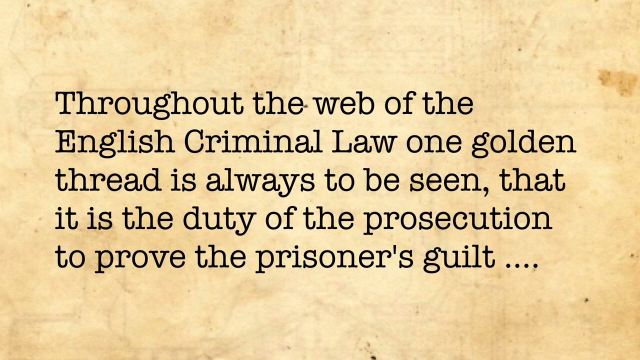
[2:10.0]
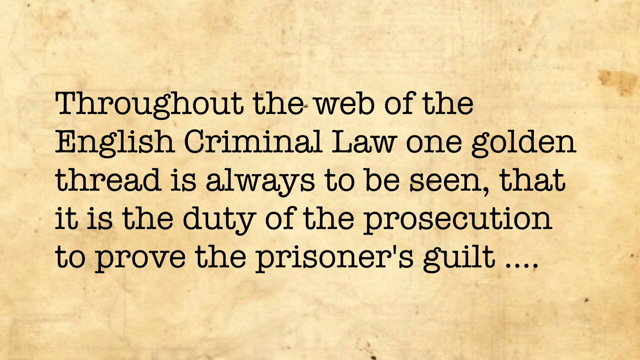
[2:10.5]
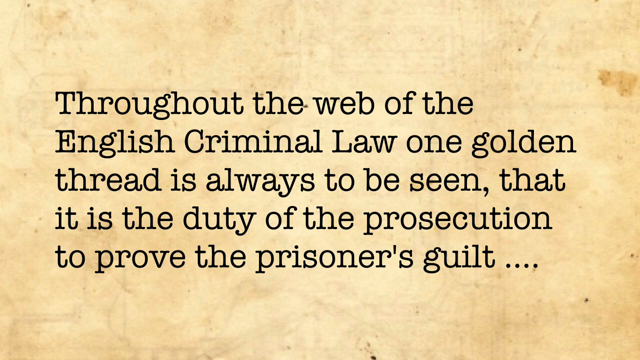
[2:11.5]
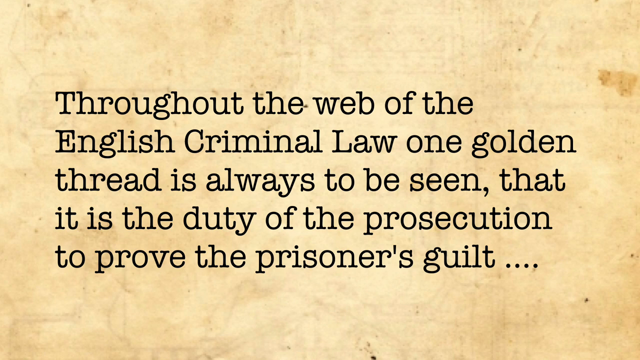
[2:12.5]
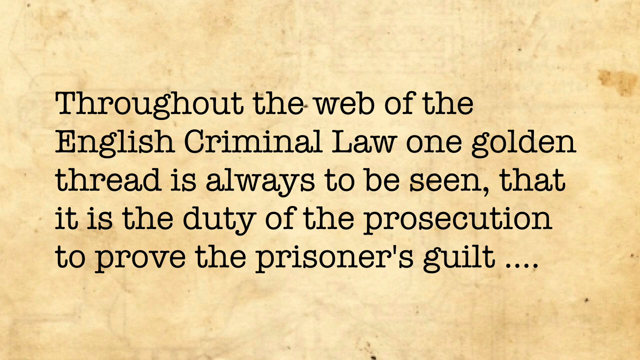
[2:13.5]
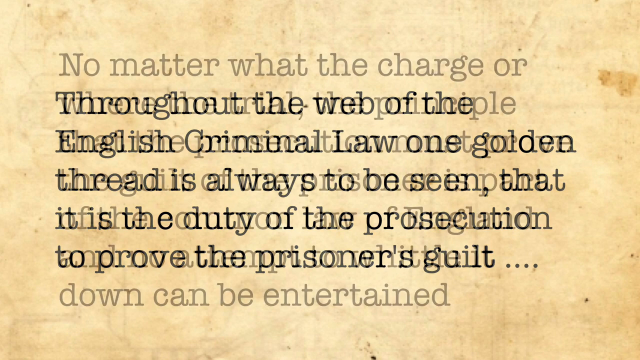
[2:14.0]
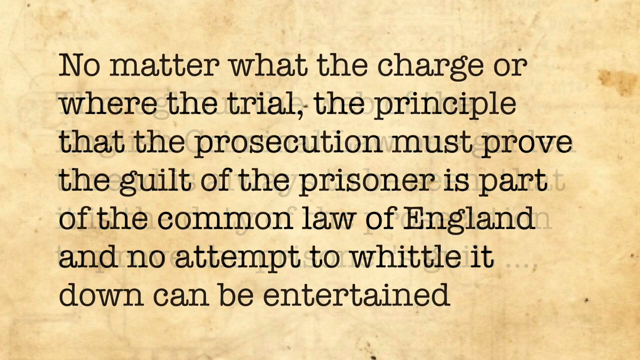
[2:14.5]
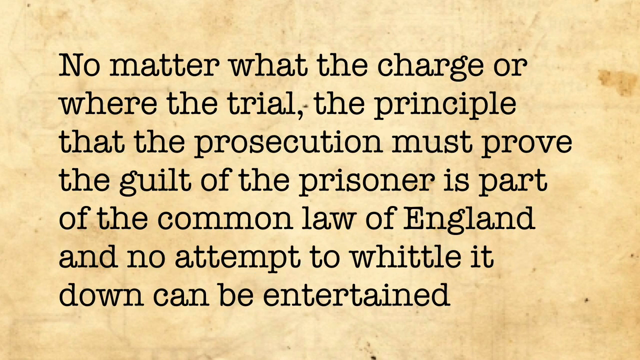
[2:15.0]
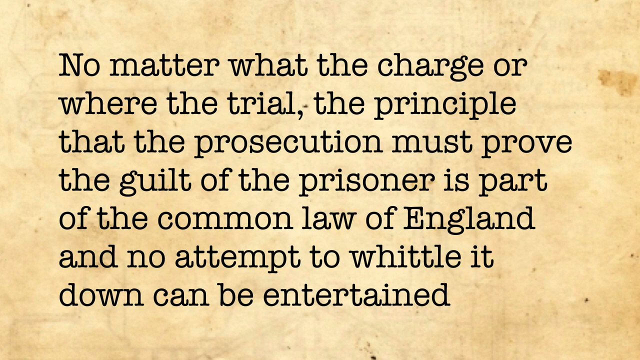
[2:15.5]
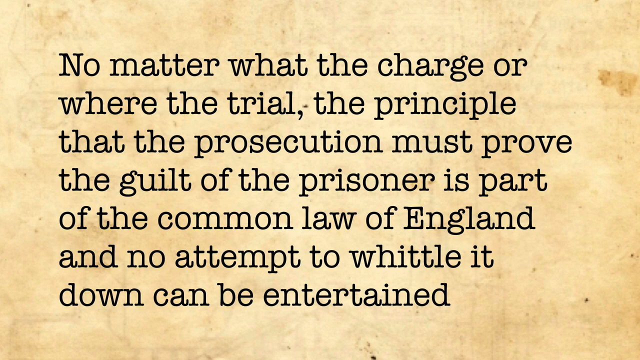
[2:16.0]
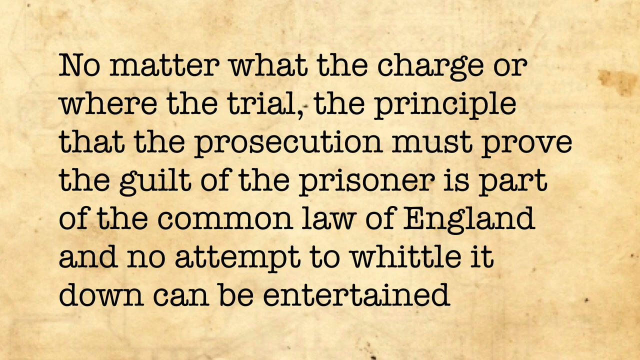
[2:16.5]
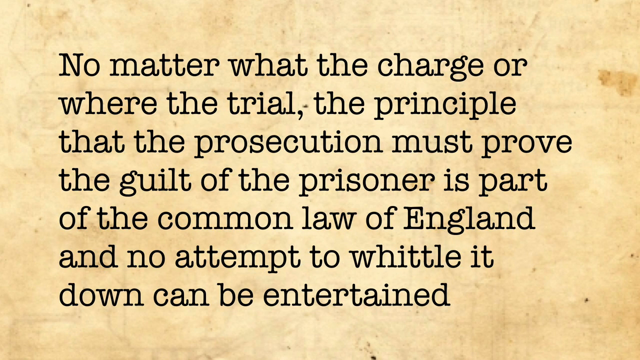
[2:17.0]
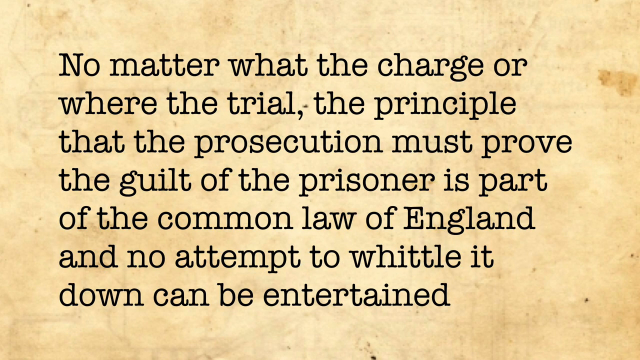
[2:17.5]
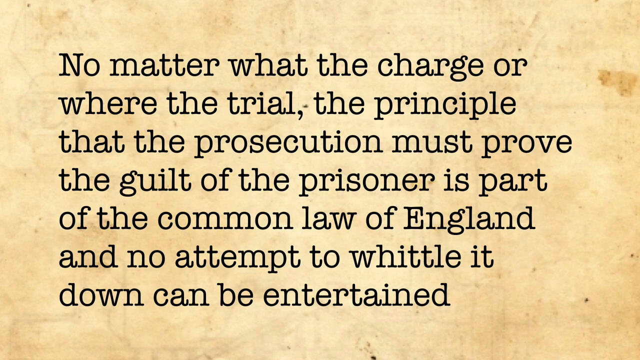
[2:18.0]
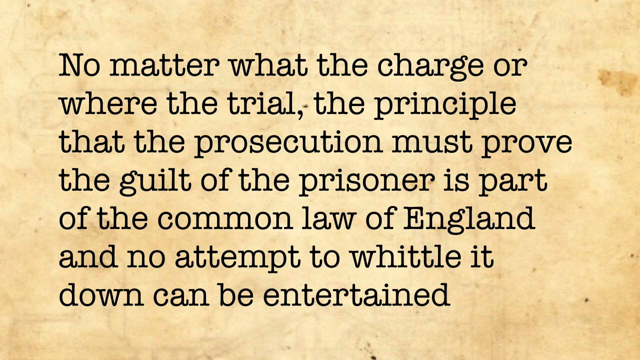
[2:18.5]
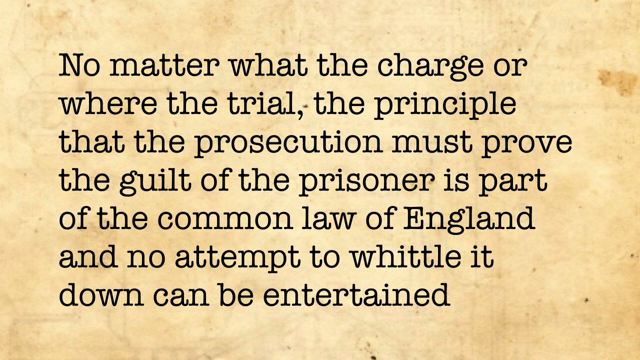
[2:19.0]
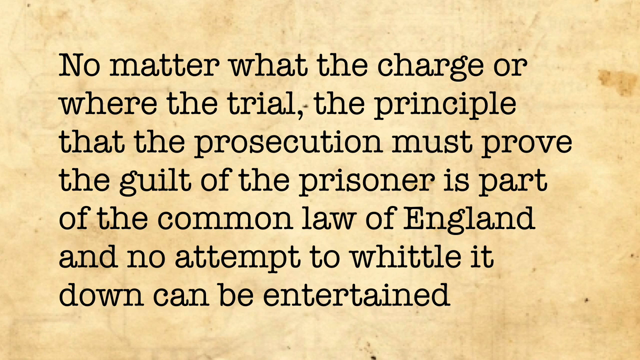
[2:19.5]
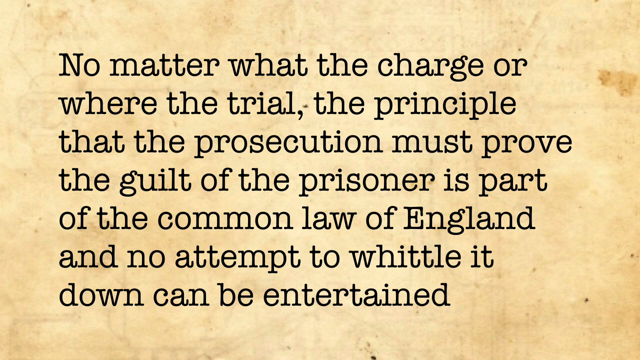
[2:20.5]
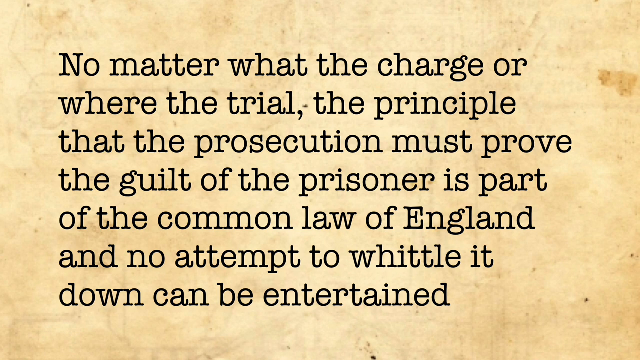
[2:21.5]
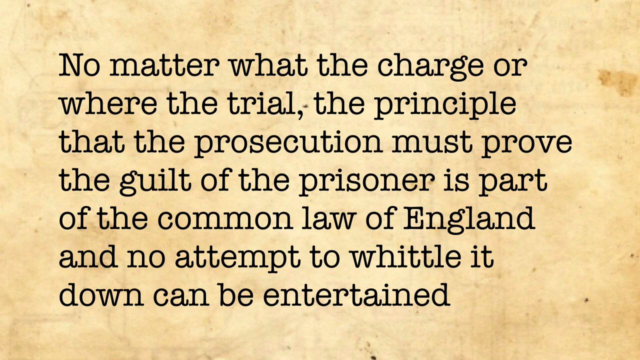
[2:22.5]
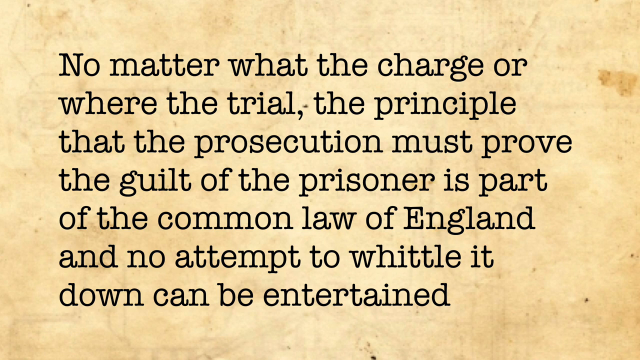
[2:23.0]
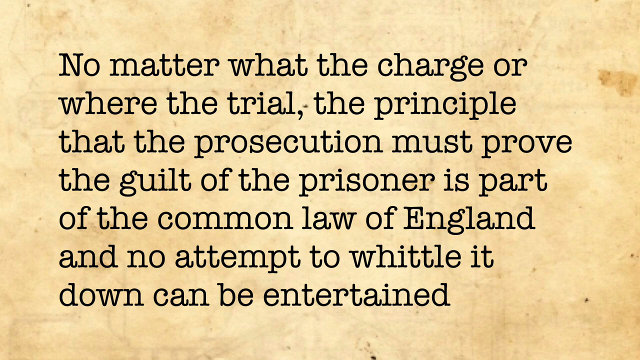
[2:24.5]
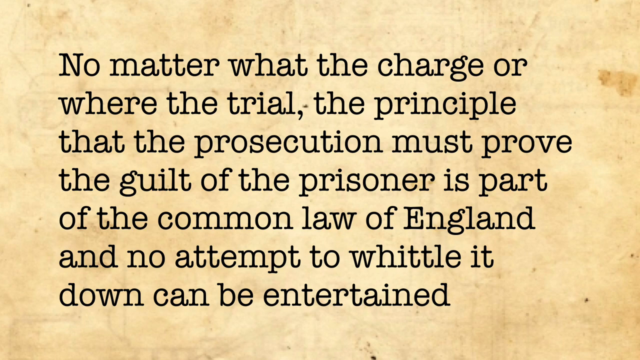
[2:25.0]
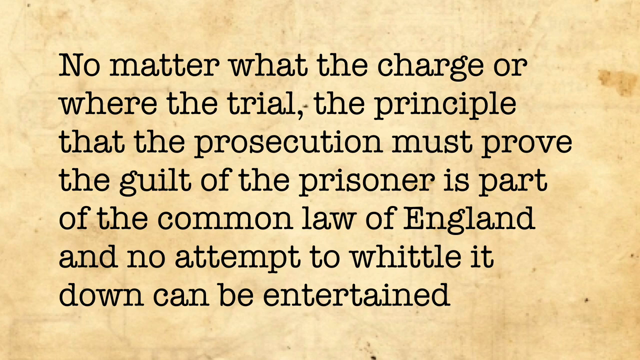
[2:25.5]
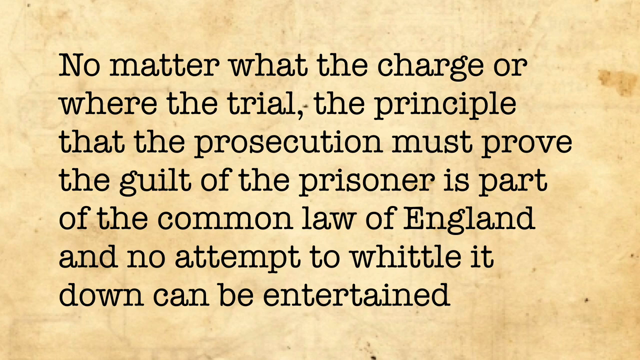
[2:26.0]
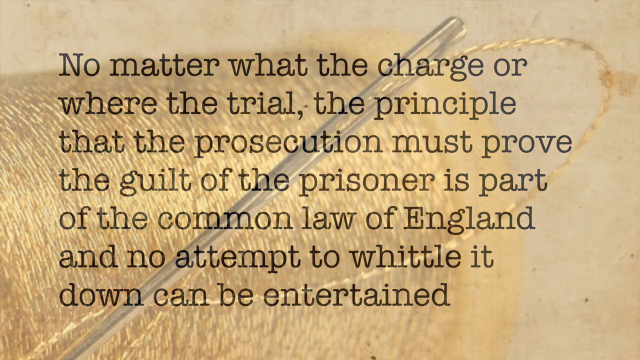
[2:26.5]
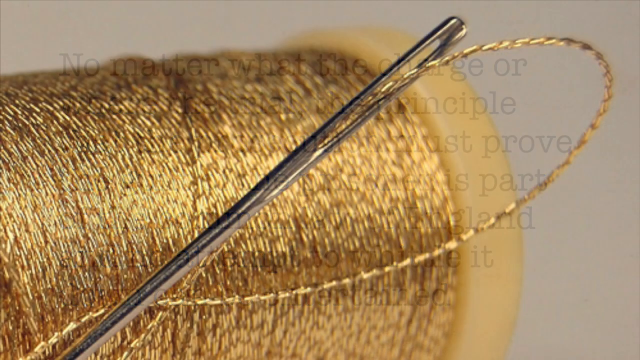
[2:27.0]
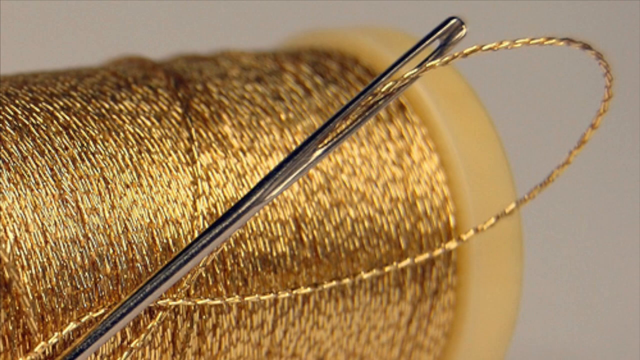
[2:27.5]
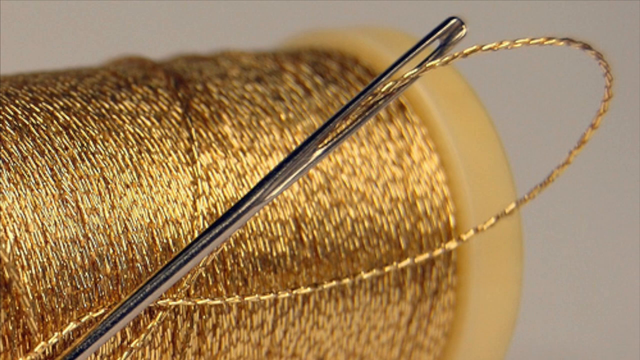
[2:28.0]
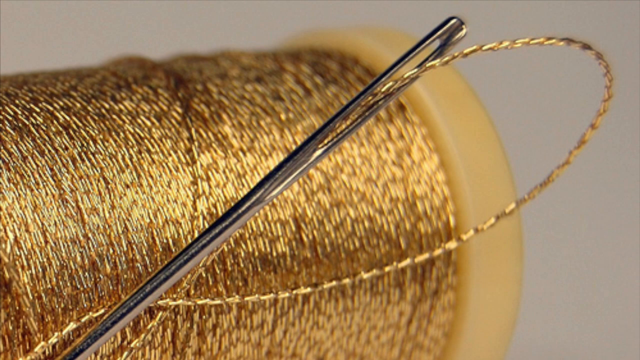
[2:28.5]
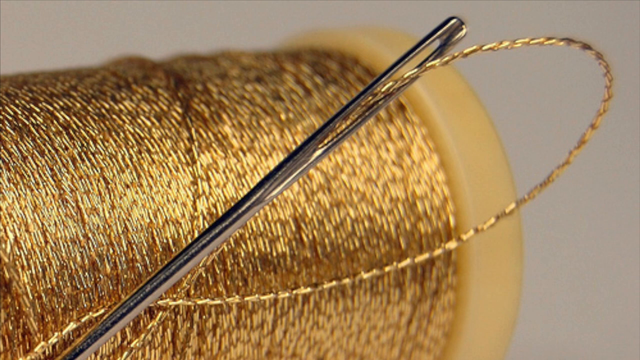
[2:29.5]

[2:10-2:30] The text on the weathered paper fades out and is replaced by other text that reads: "no matter what the charge or where the trial, the principle that the prosecution must prove, the guilt of the prisoner is part of the common law of England, and no attempt to whittle it down can be entertained." It is on the same very yellowed, weathered paper with the same black splotches over the sides, and is shown for a short time. After a fade out, a new image appears to show an extreme close-up of a spool of bronze thread. A single piece of thread comes off the spool, loops over and goes into the eye of a needle. The still image is shown for a moment.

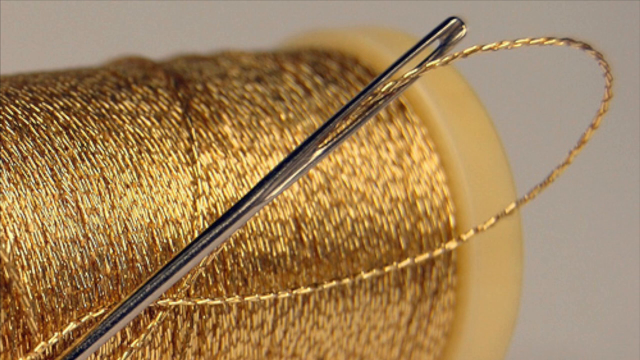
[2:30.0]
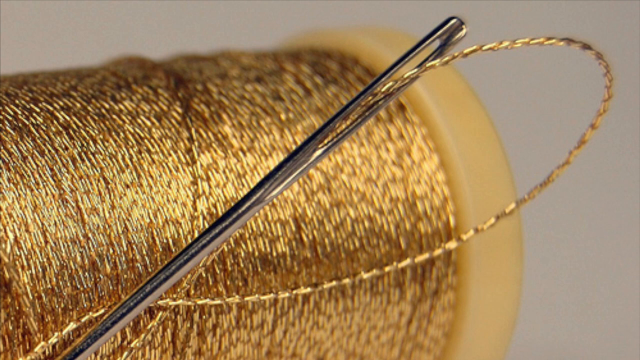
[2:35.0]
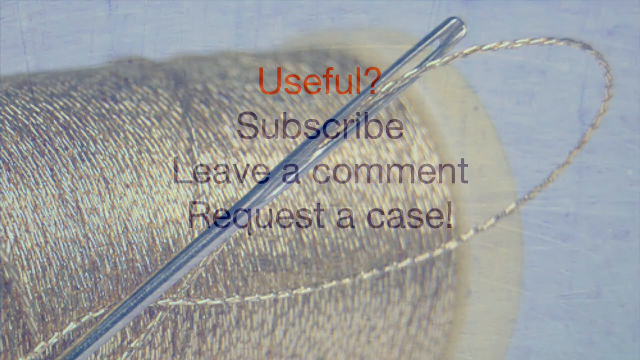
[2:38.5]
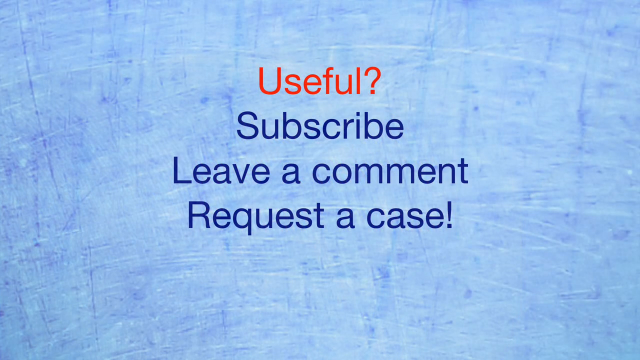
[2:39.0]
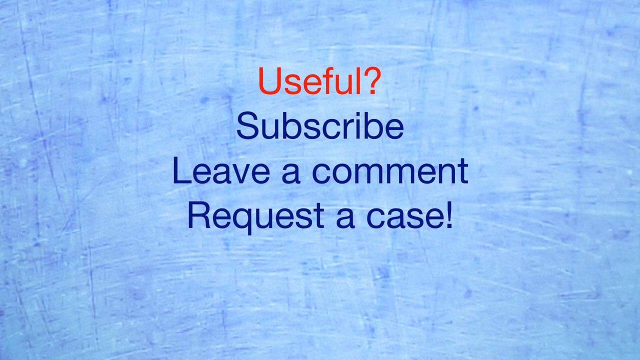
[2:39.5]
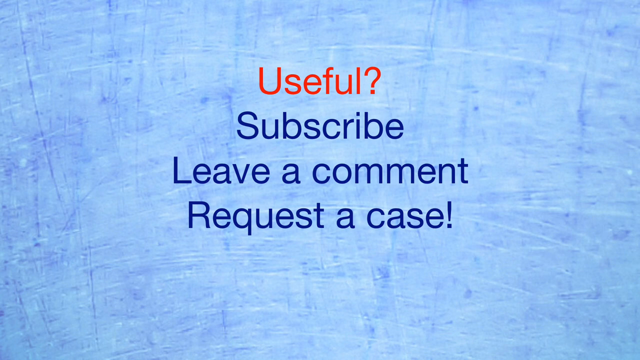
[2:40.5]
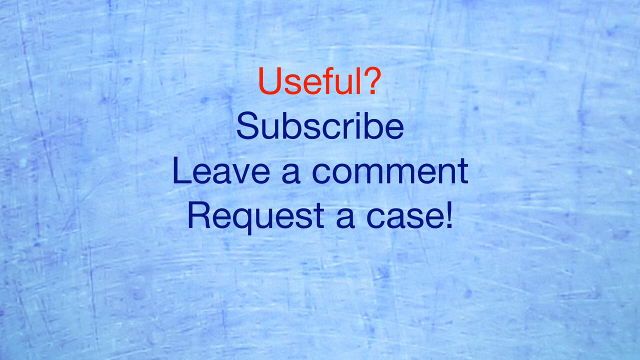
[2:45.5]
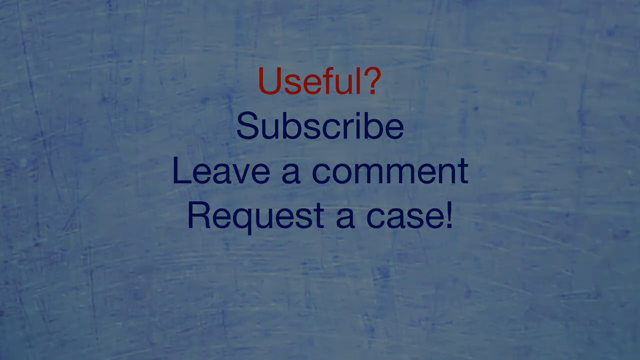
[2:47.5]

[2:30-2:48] The close-up of the spool of yarn continues. The yarn has a bronze, braided appearance and a texture that appears very tactile, with light reflecting off it from the top right. The background is gray and out of focus. The needle is centered on the screen, lying somewhat diagonally, and its eye is very wide. The loose piece of thread comes off the yarn to the right, loops over and goes into the eye. The camera lingers on the yarn, then fades to a new screen with text reading "Useful. Subscribe. Leave a comment. Request a case." The text is over the same white background as at the beginning of the video, with blue scratches all over it and scuff marks. It fades to black and the video ends.